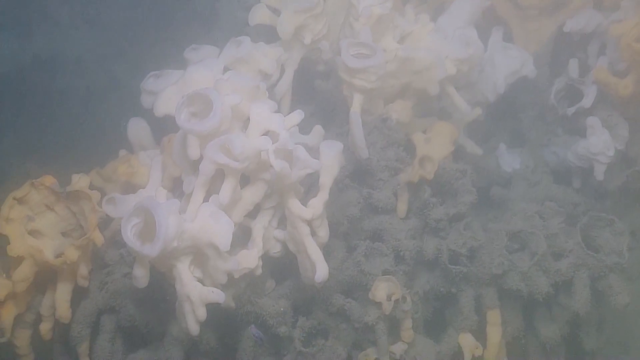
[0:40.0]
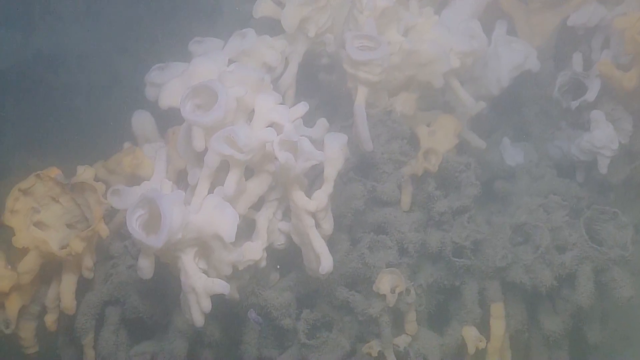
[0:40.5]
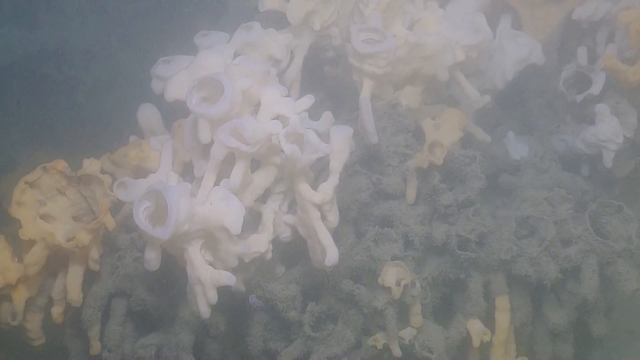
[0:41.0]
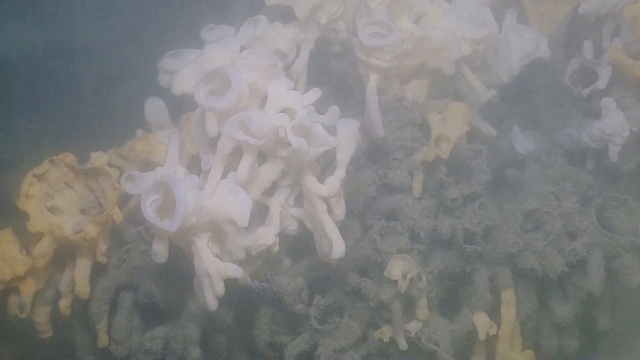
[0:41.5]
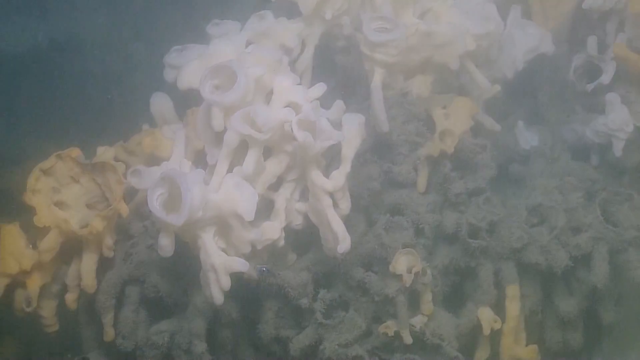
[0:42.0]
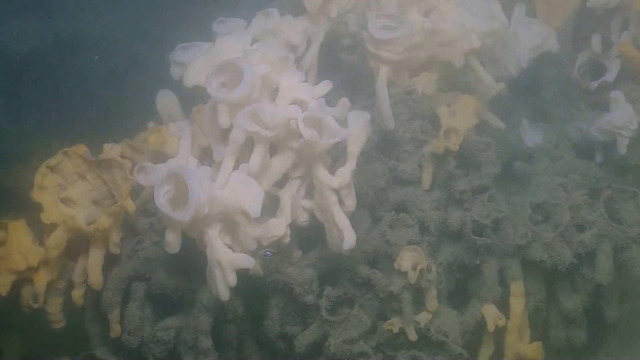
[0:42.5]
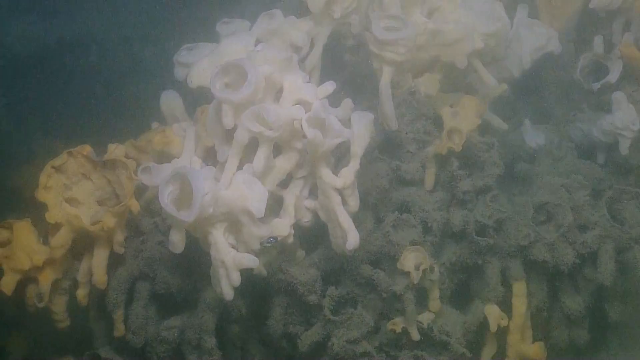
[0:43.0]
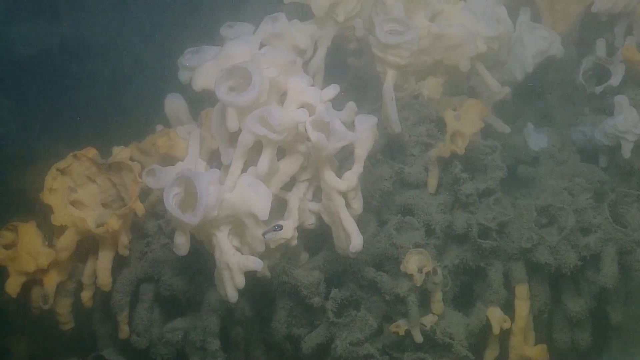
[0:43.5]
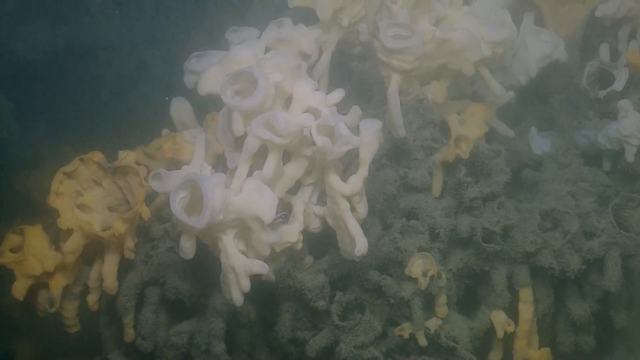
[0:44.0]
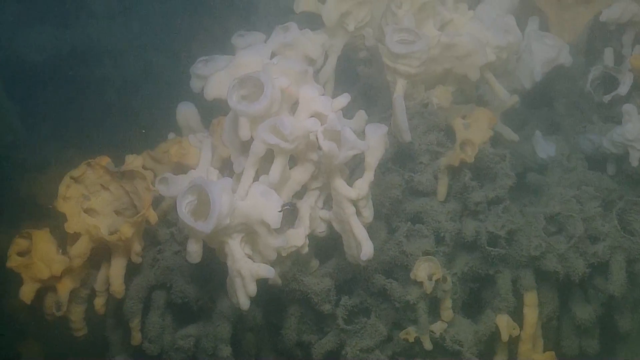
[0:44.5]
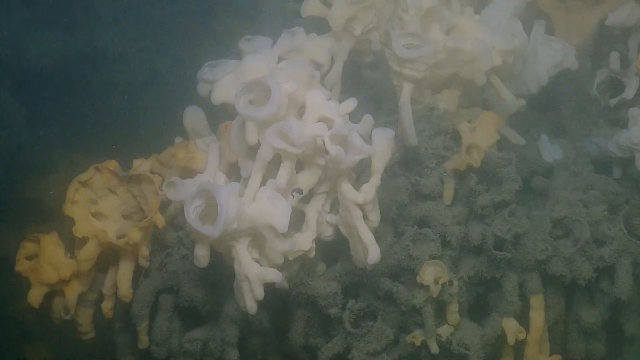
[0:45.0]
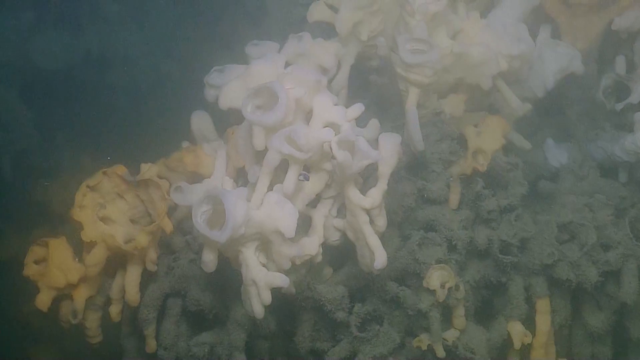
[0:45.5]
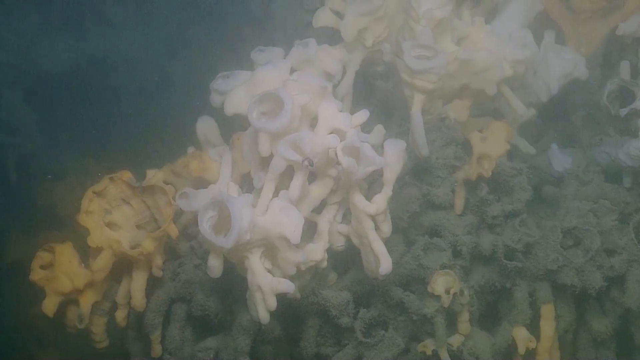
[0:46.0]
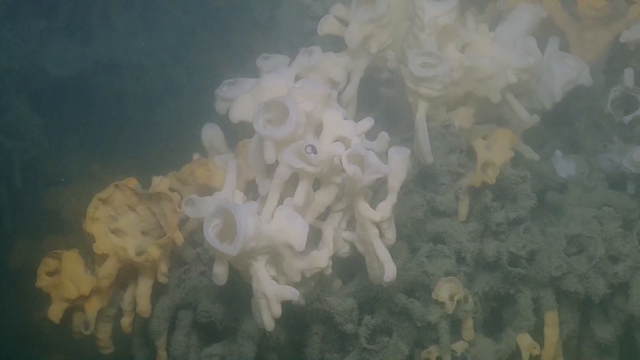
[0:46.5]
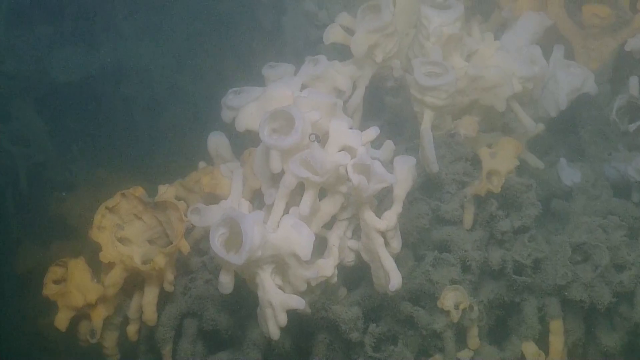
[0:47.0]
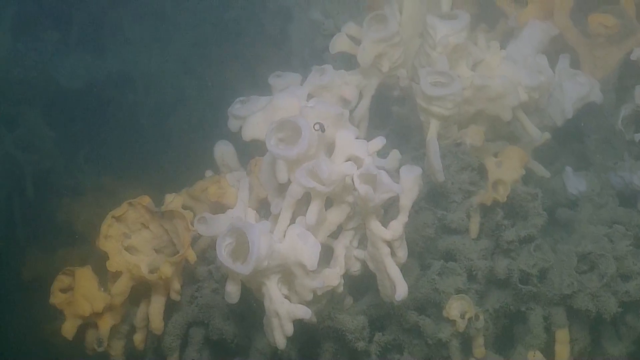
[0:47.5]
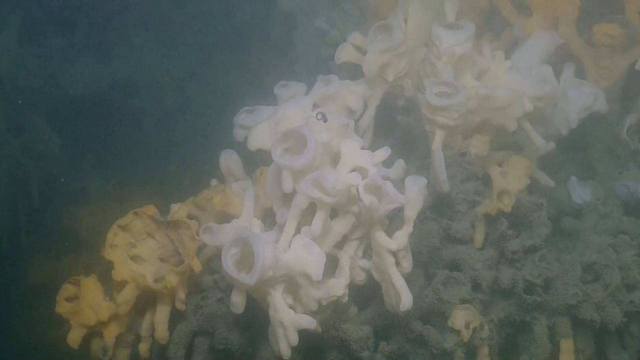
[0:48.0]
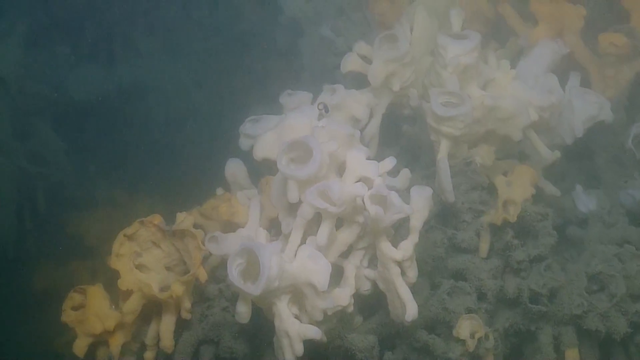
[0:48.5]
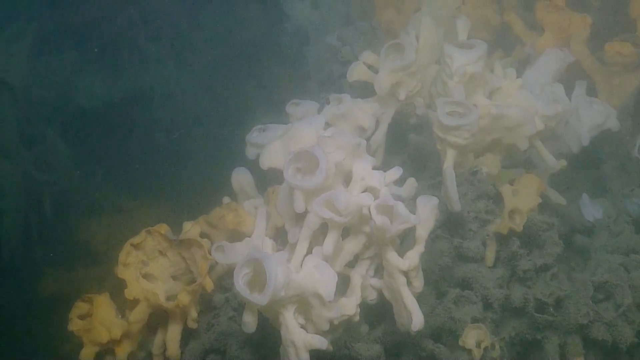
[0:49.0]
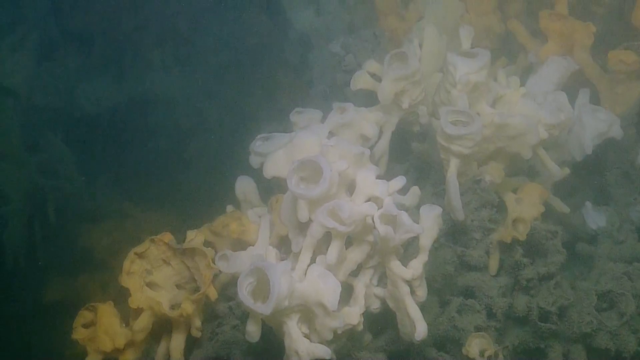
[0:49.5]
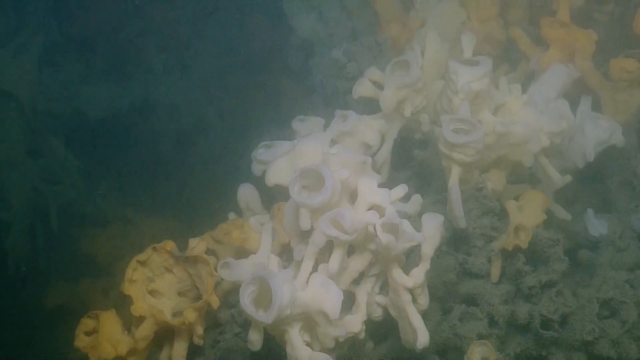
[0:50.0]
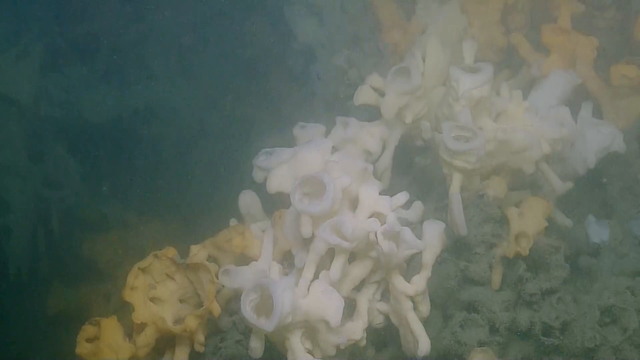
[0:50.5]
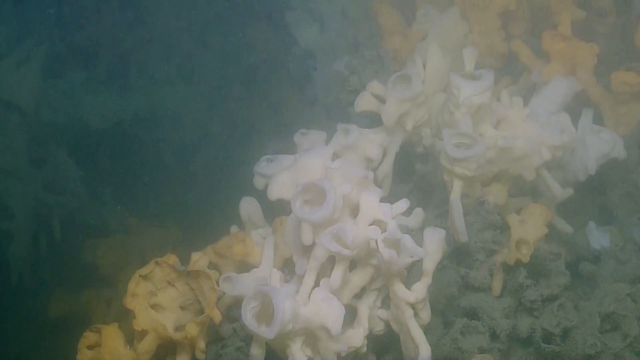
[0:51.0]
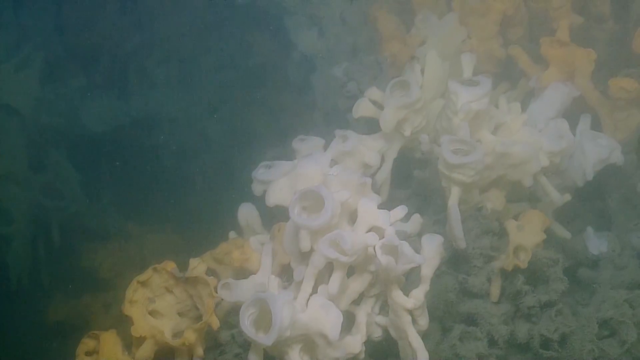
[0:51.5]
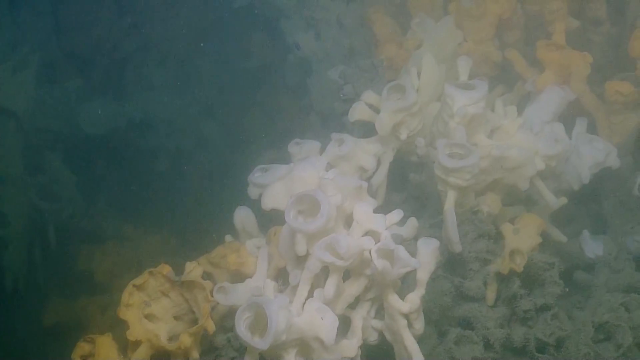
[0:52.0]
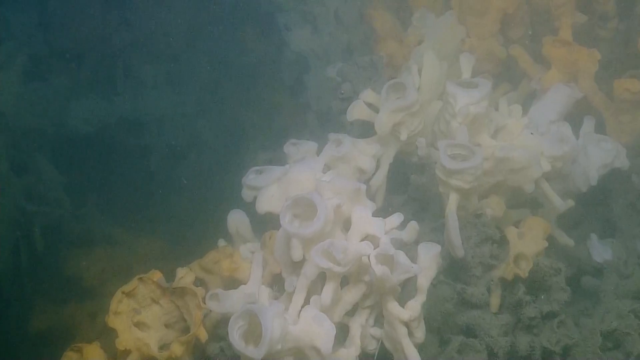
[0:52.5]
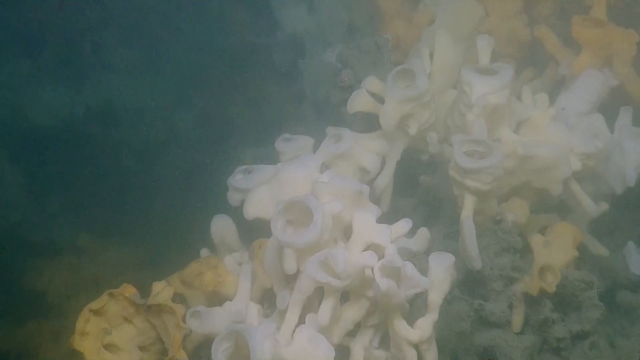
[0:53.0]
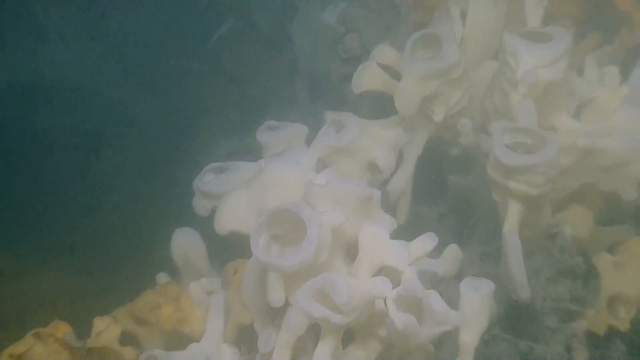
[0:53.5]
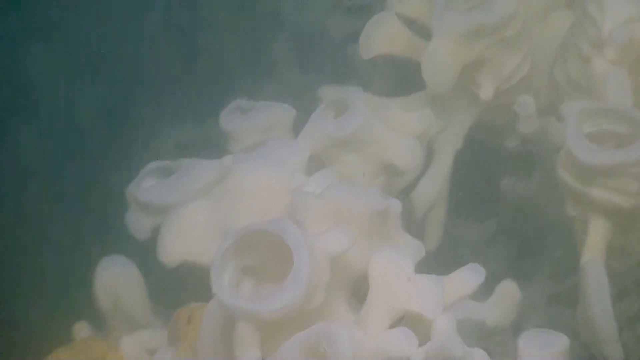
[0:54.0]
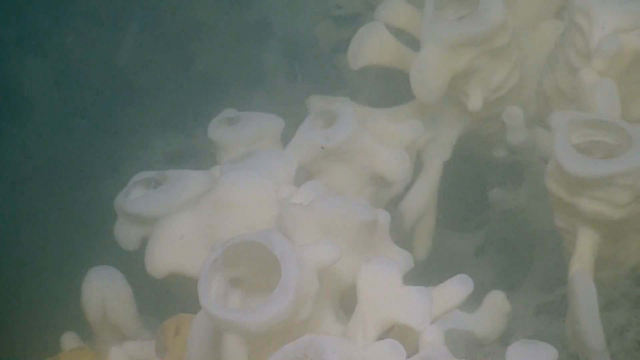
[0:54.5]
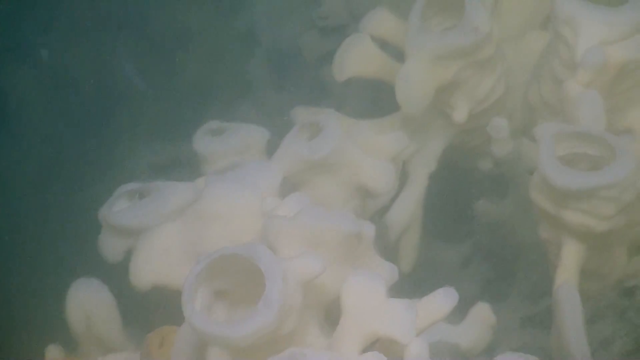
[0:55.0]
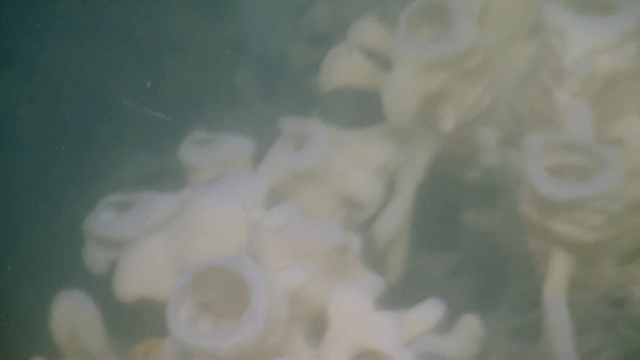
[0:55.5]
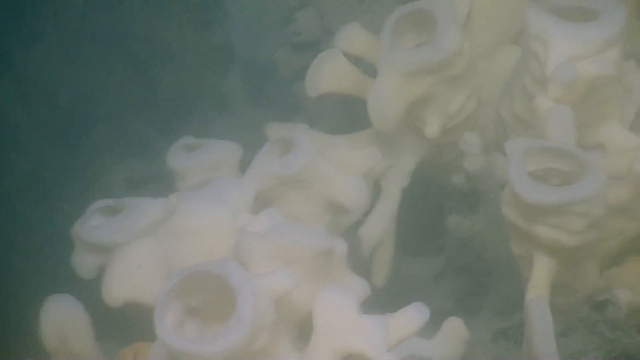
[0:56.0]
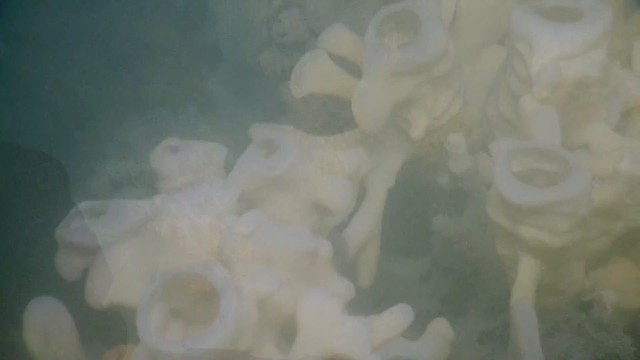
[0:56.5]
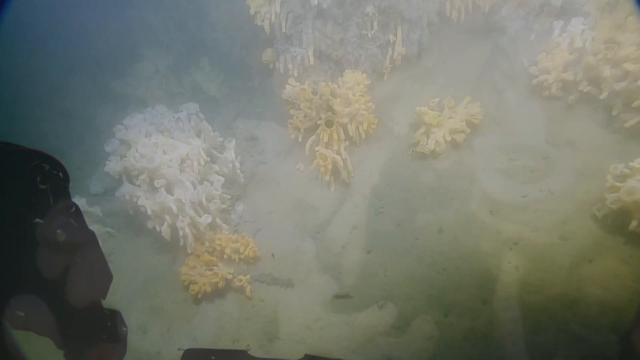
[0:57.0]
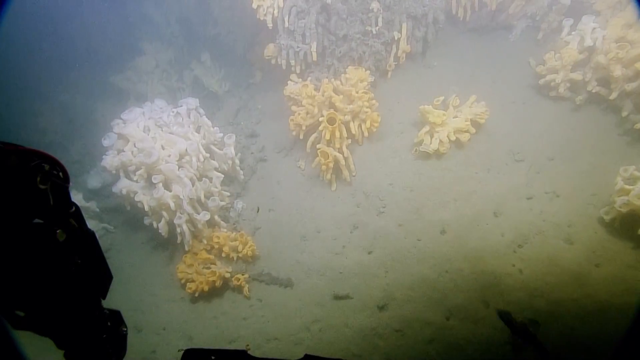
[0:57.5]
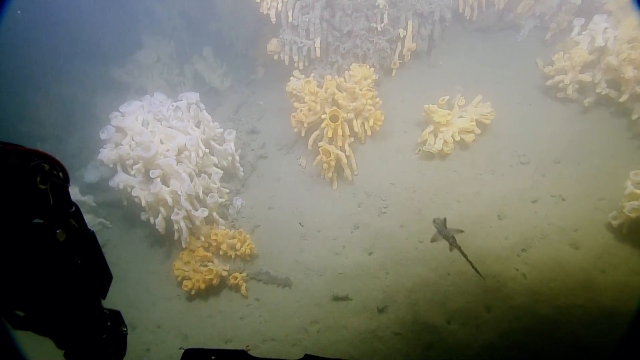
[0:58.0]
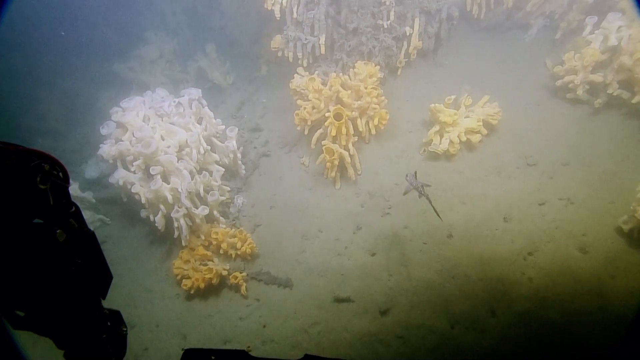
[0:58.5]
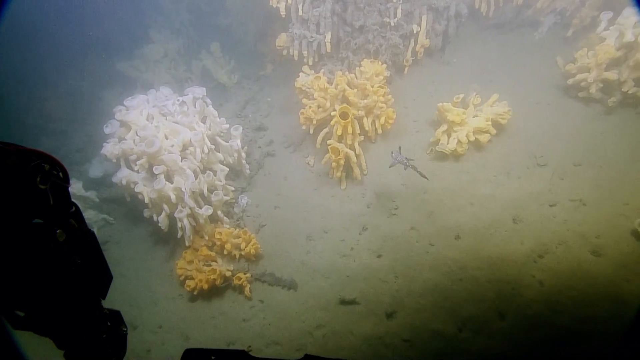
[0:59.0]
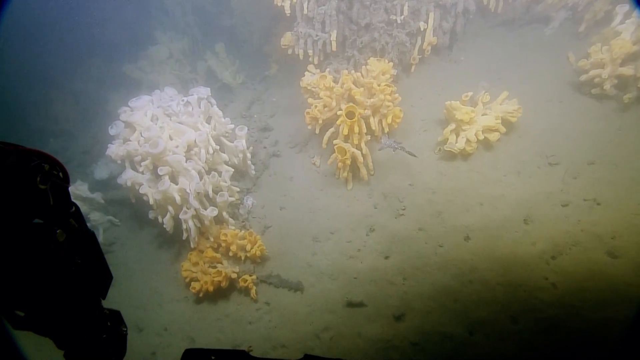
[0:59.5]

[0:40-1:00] The live submarine footage shows an extremely close-up view of white coral against a light blue background. The coral is mostly white, with a little orange coral at the bottom left and top right of the screen, and more light green coral at the bottom right. The view is somewhat cloudy, as if looking through debris. The camera pans down, the picture becomes a little clearer and darker, and a tiny fish floats up through the coral from the bottom of the screen to the top. The camera follows it upward for a bit, then zooms in very closely to the coral, and little things can be seen floating in the water. The next scene is a live feed of coral in a different section. Three pieces of coral take up most of the screen: a larger white piece on the left center, a smaller light orange piece in the center, and a tiny off-white piece on the right. Suddenly what looks like a tiny baby shark swims quickly into the scene from the bottom of the screen toward the middle coral.